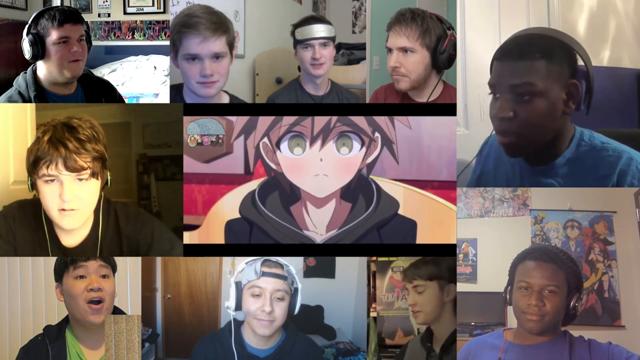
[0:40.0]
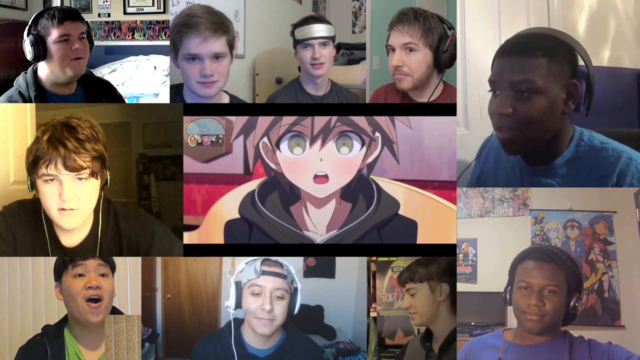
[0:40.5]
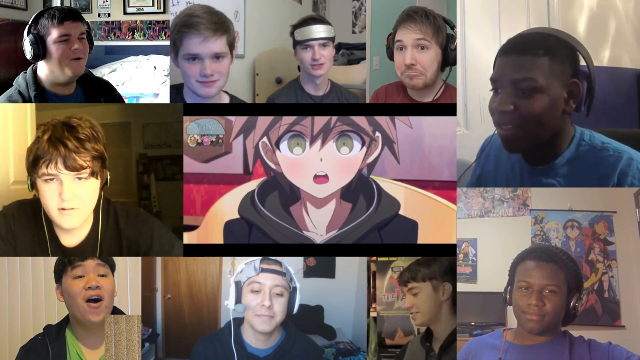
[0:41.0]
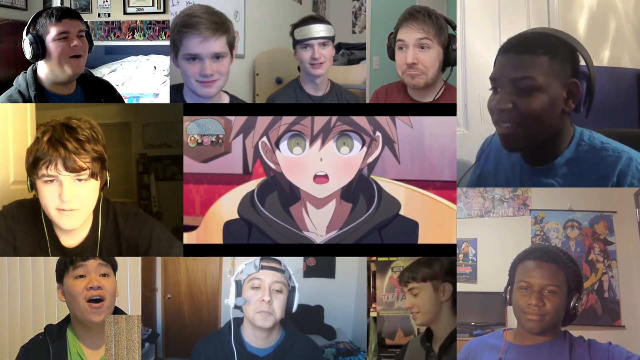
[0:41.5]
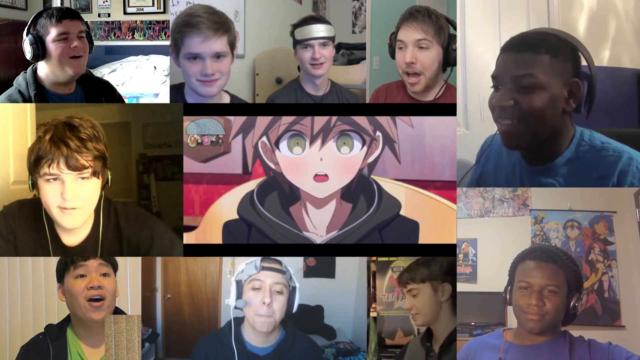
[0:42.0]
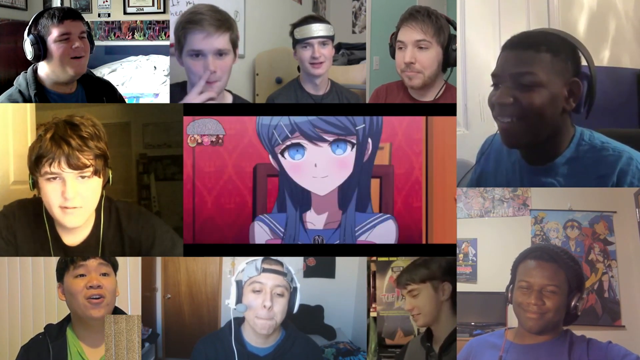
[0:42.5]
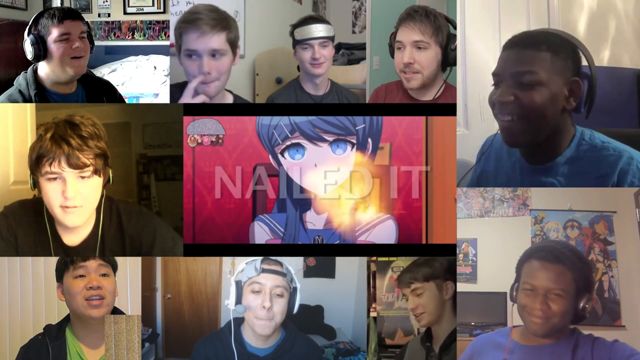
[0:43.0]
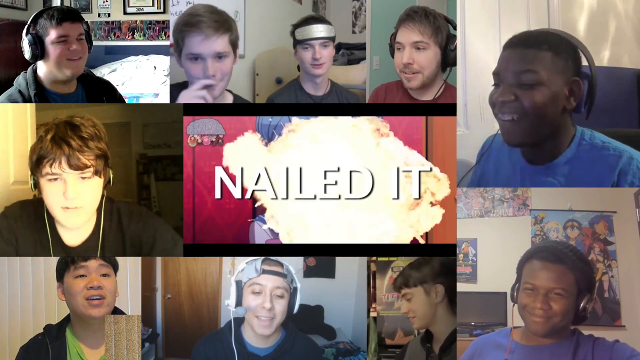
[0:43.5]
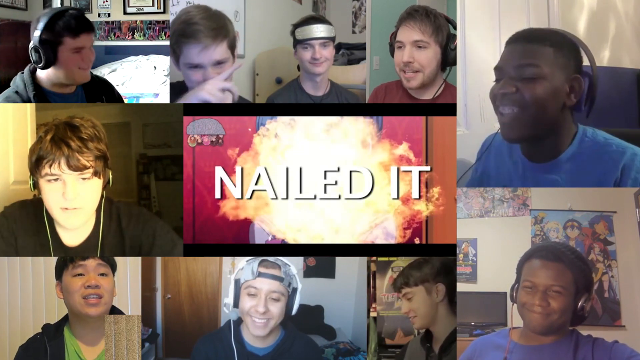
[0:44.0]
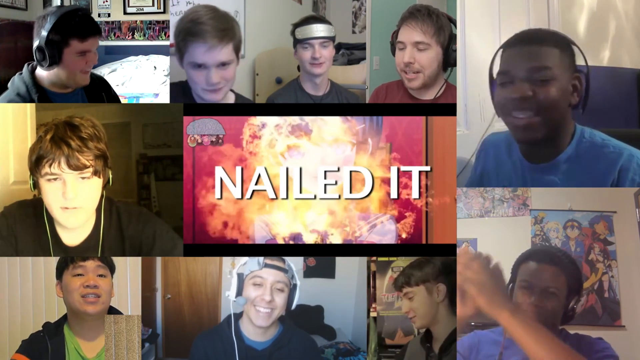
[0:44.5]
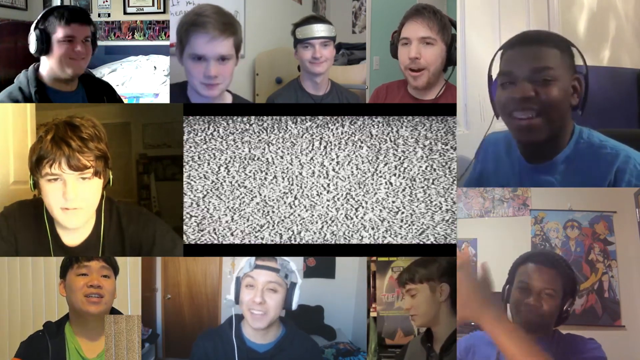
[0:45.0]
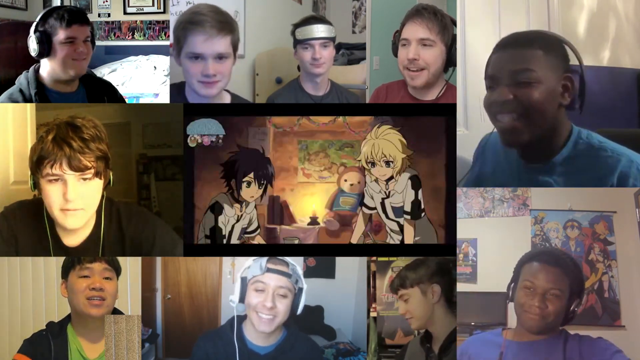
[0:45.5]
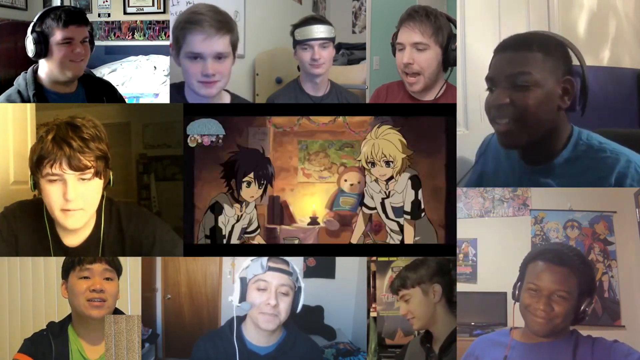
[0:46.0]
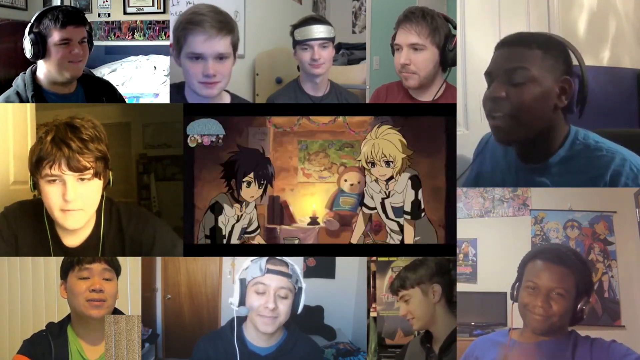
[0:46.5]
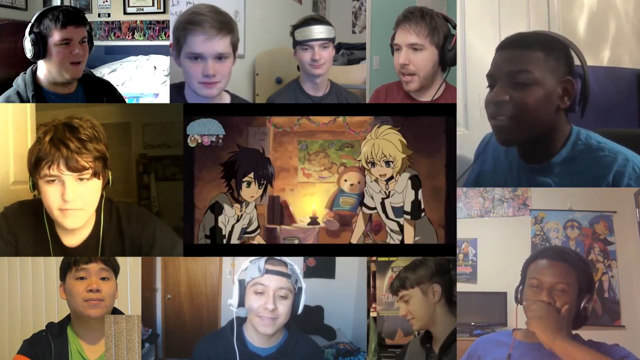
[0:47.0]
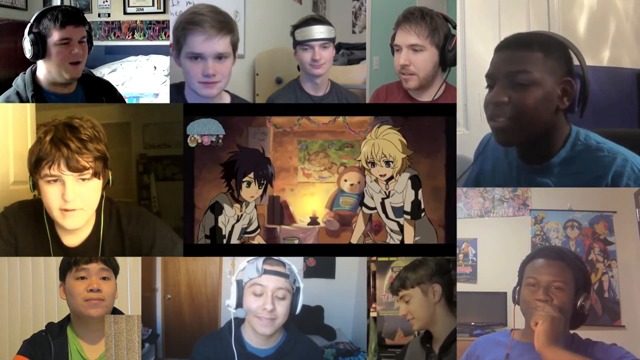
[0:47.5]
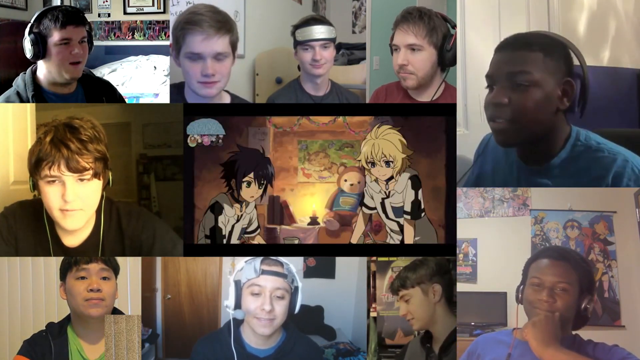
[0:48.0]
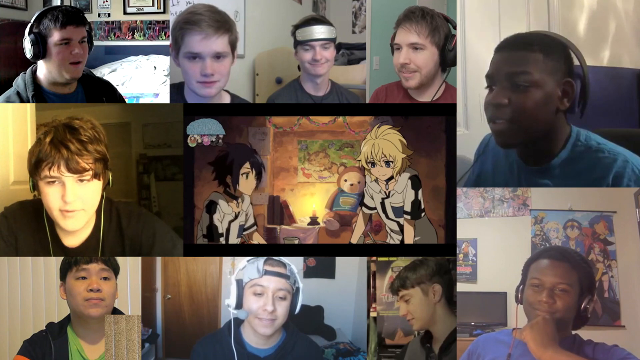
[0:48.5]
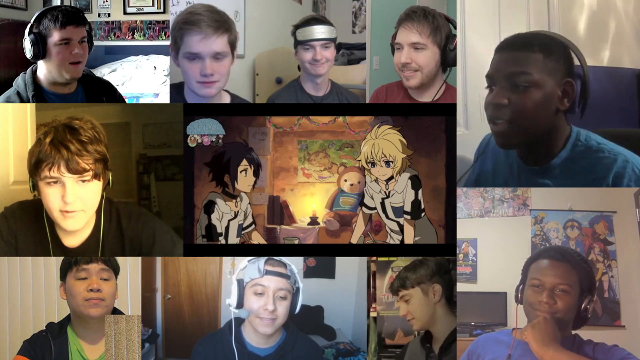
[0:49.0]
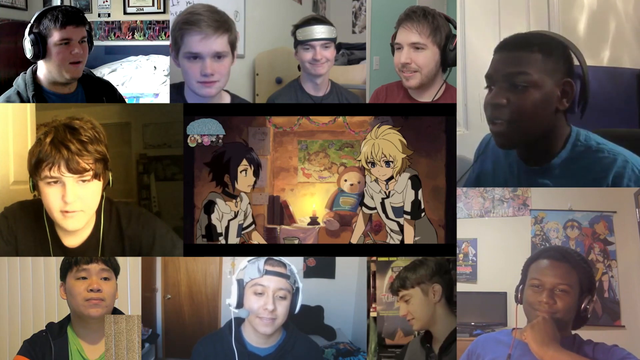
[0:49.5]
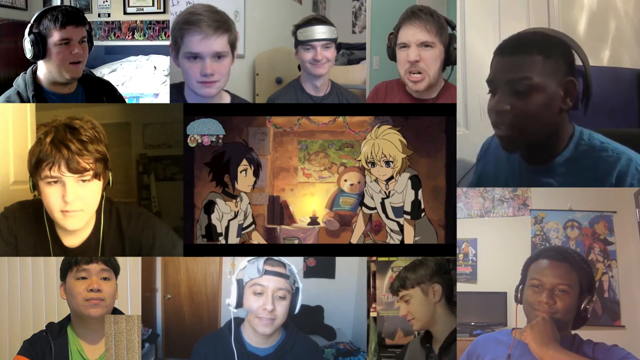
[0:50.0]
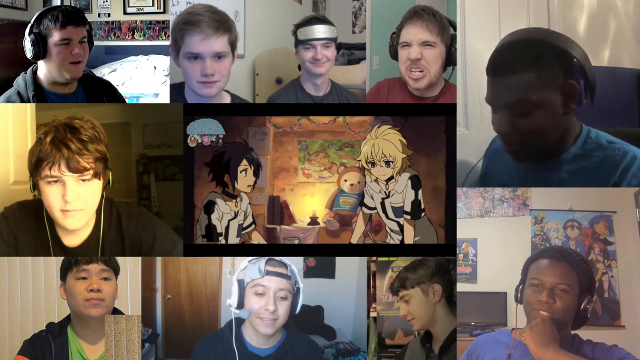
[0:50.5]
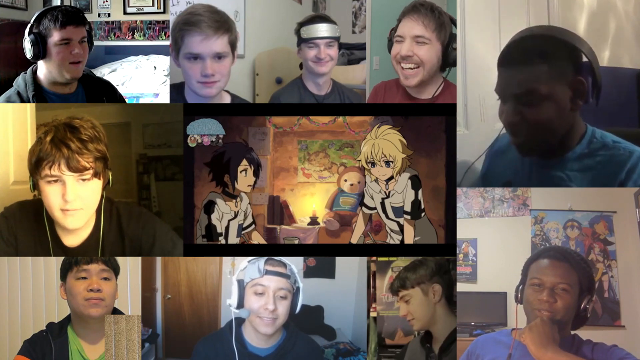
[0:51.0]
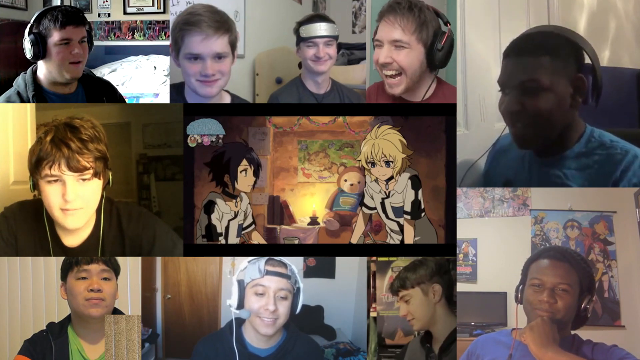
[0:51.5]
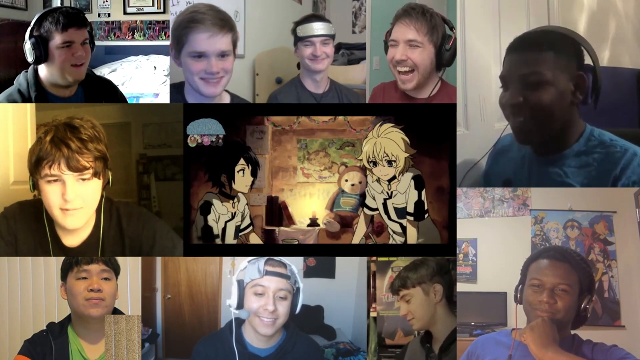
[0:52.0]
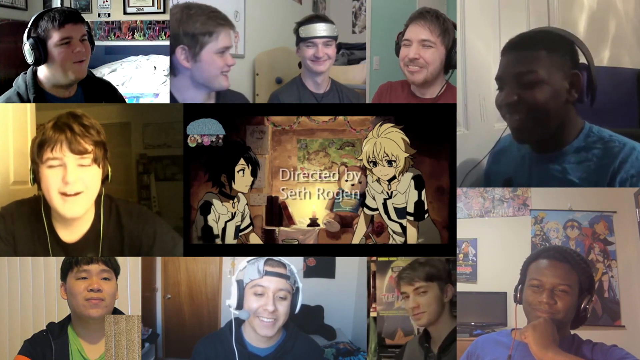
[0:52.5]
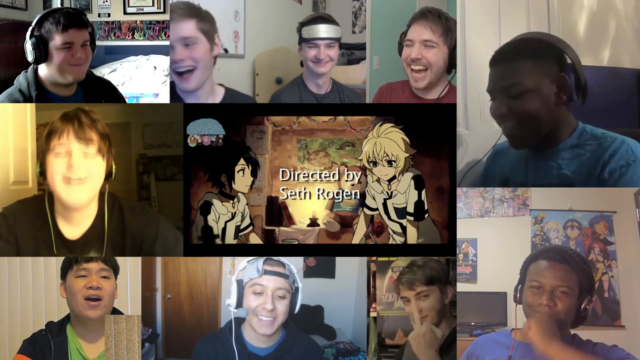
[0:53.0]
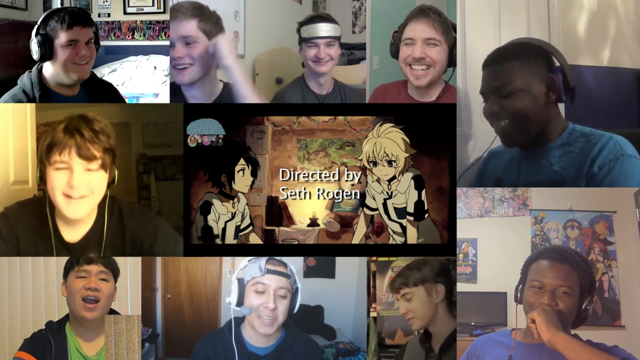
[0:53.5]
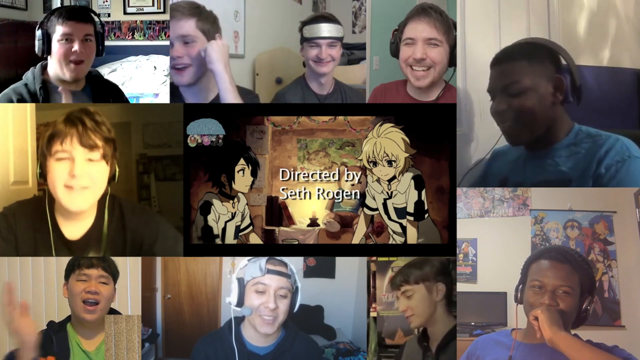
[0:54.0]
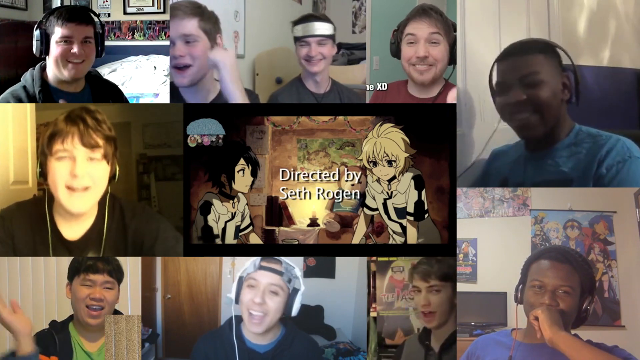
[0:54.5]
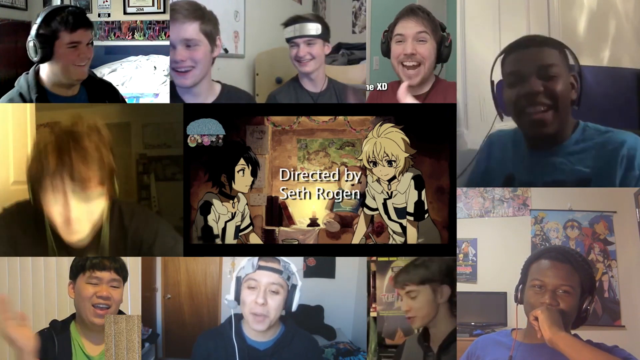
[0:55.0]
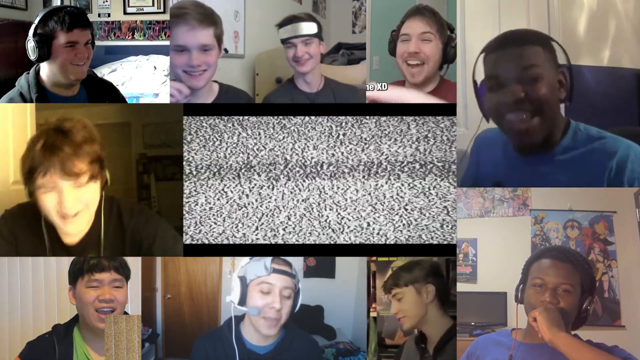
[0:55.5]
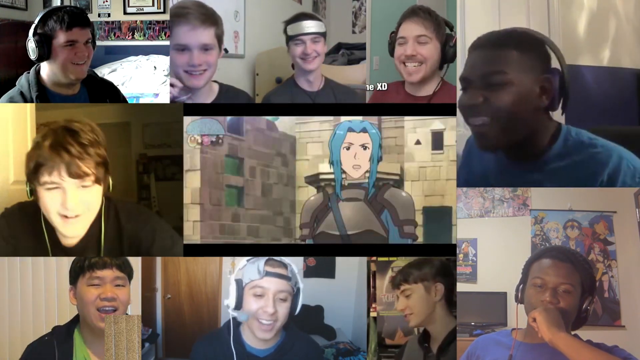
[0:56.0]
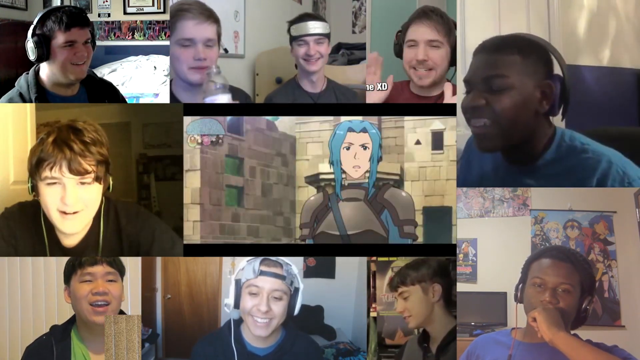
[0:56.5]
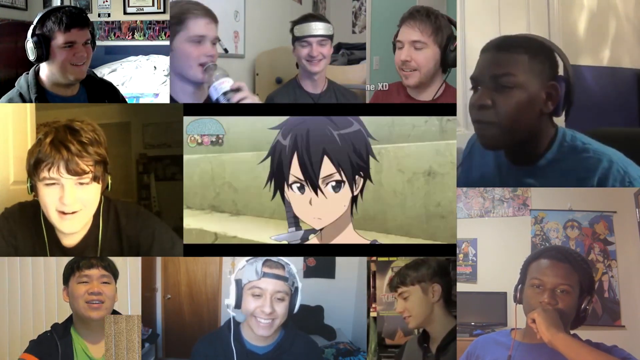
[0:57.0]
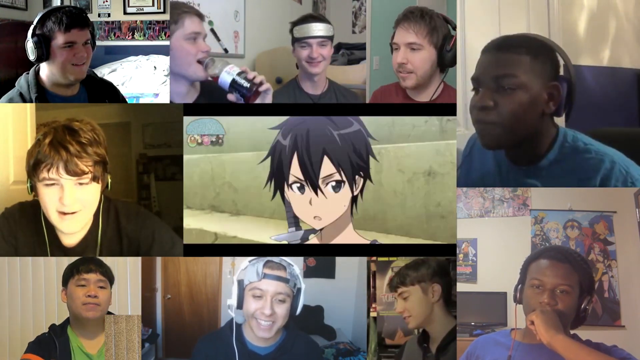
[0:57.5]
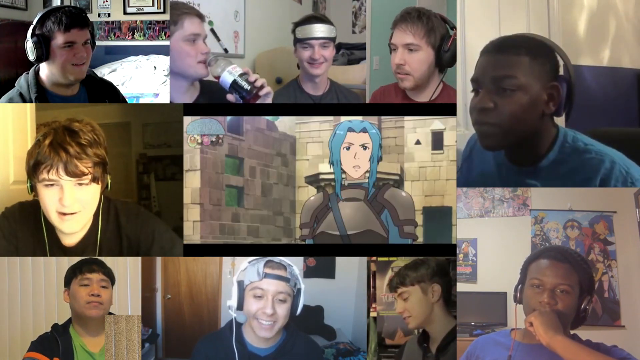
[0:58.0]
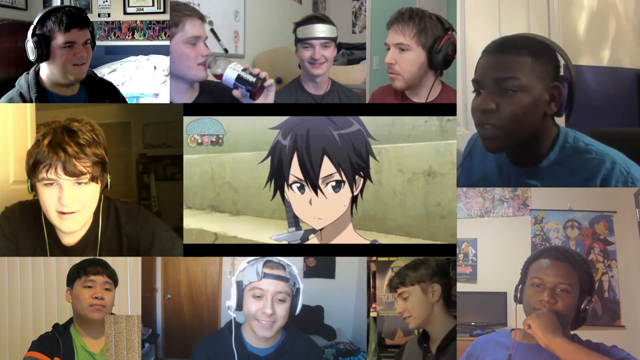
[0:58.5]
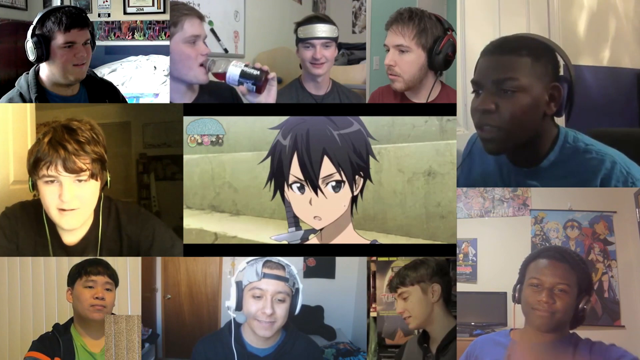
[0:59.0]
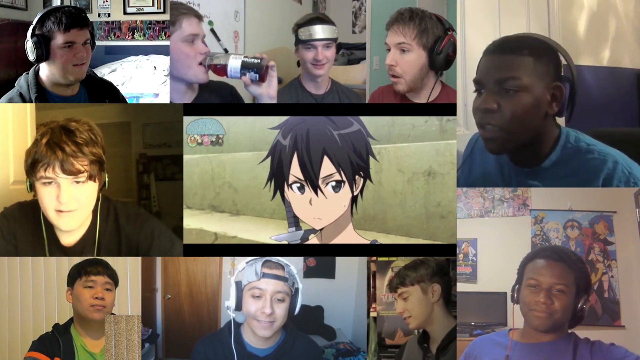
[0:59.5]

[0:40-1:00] A collage shows a group of guys who are live streaming or in a group chat, watching anime clips and kind of reacting to them. A shocked animated character talks. A girl with very large blue eyes and blue hair appears with white text that says "nailed it" and an explosion at the top. The guys all laugh, and it transitions to more animated clips of a boy with black hair and a girl with white hair. The guys kind of watch, and the guy at the top right laughs. Text says "directed by Seth Rogen", and everybody begins to laugh and talk. Another animated character, a man with long blue hair, wears some kind of gear. A guy with black hair kind of looks mad, followed by the guy with the blue hair, and then the video kind of quickly goes through different scenes.